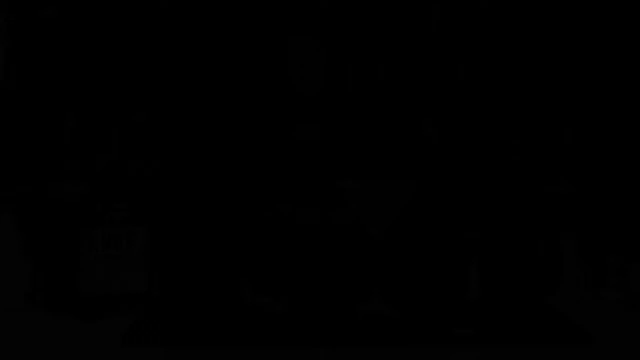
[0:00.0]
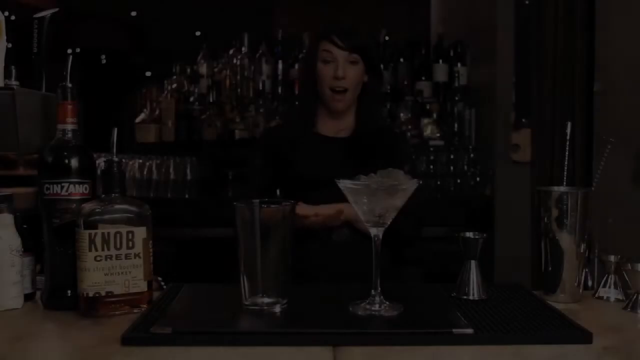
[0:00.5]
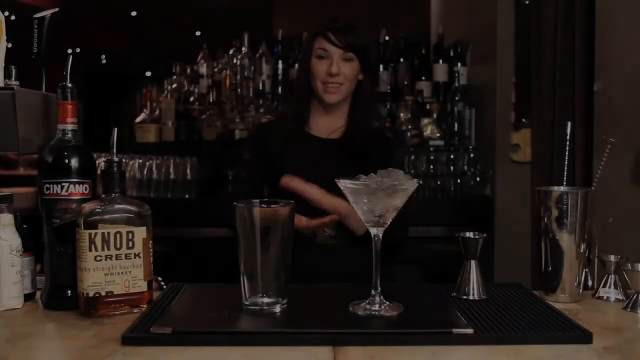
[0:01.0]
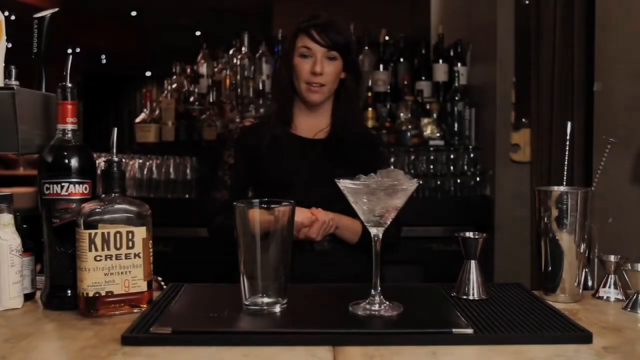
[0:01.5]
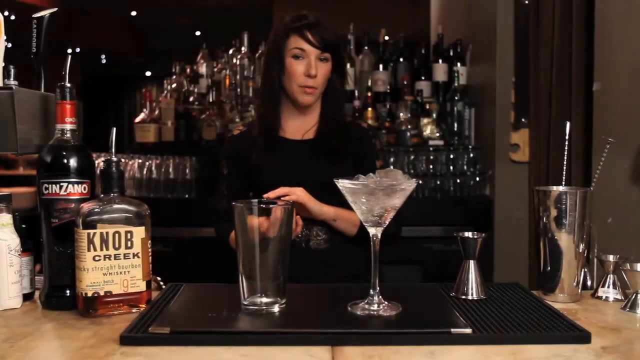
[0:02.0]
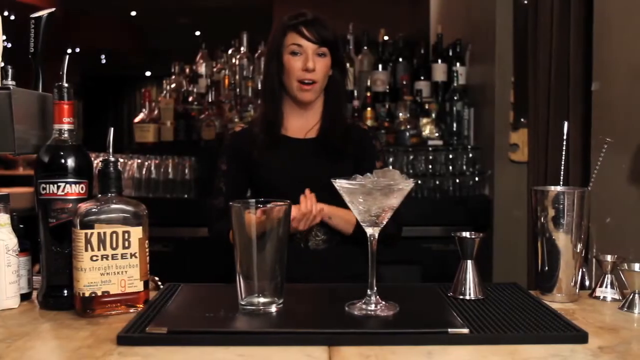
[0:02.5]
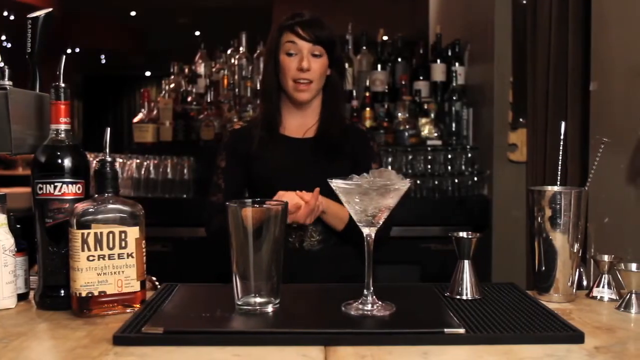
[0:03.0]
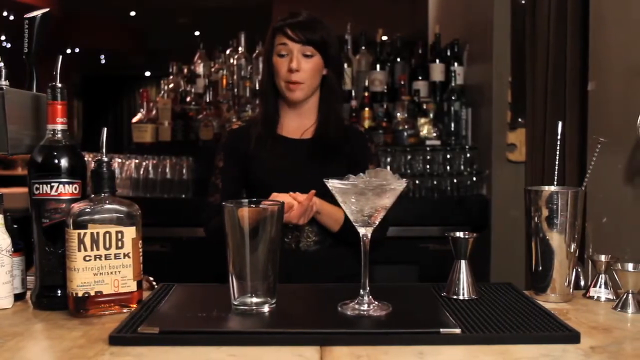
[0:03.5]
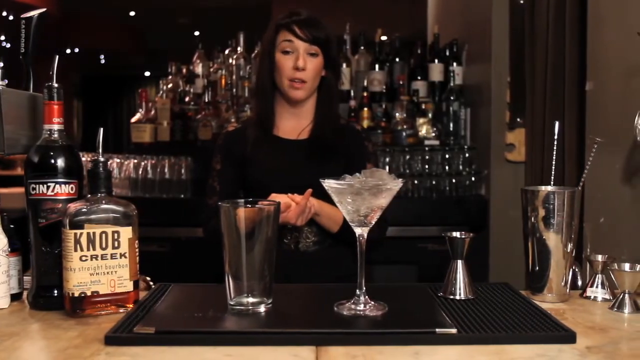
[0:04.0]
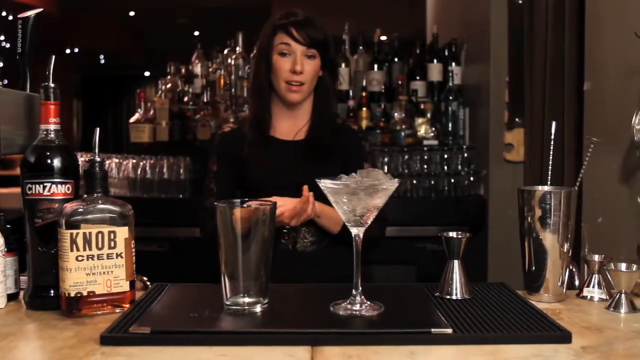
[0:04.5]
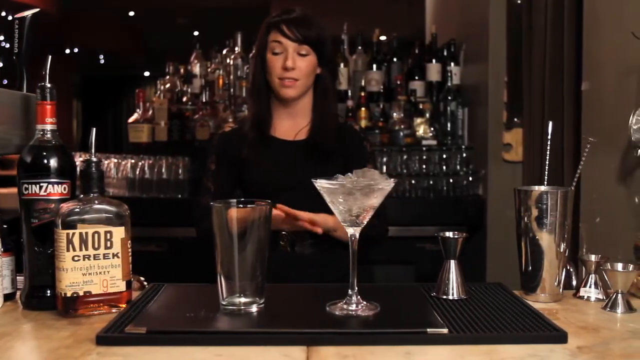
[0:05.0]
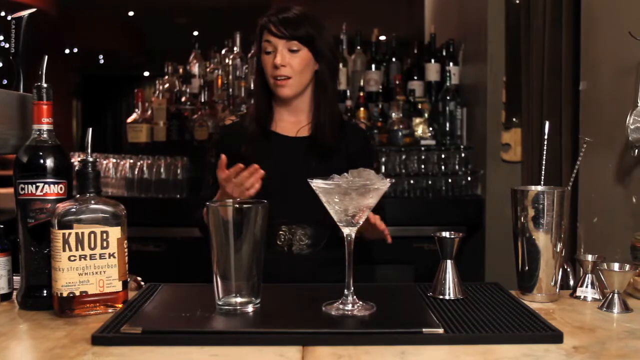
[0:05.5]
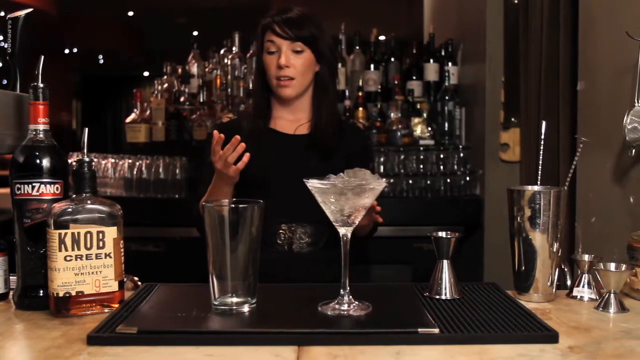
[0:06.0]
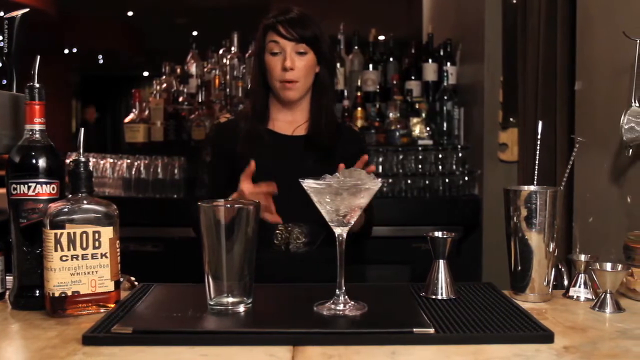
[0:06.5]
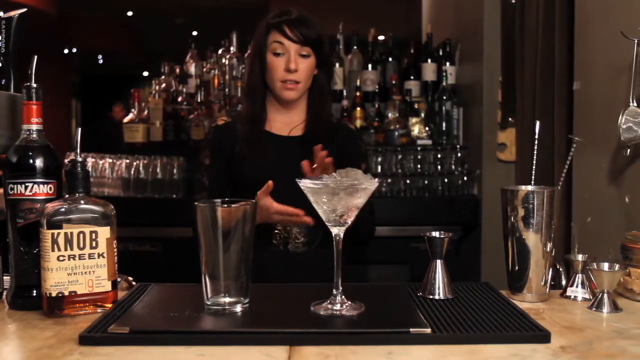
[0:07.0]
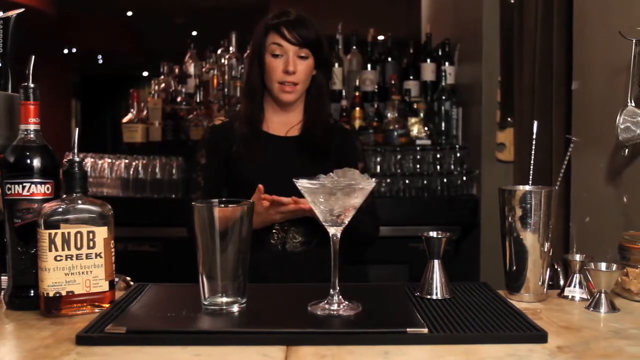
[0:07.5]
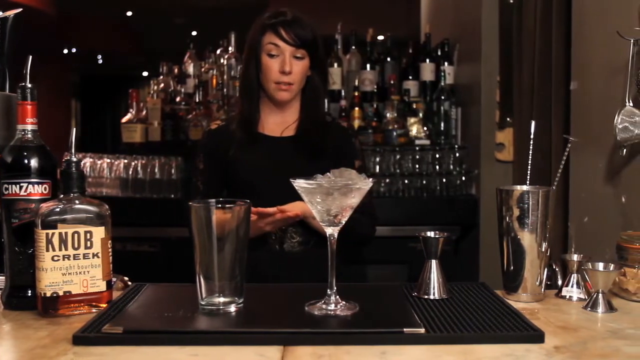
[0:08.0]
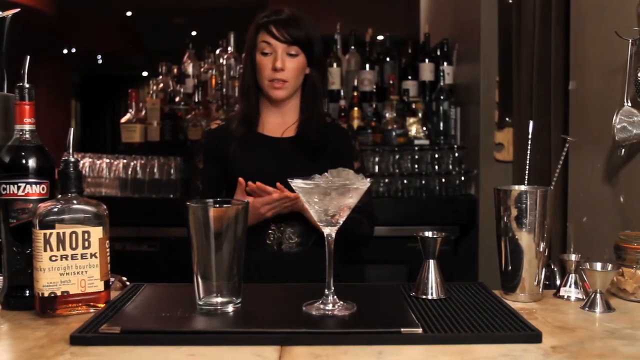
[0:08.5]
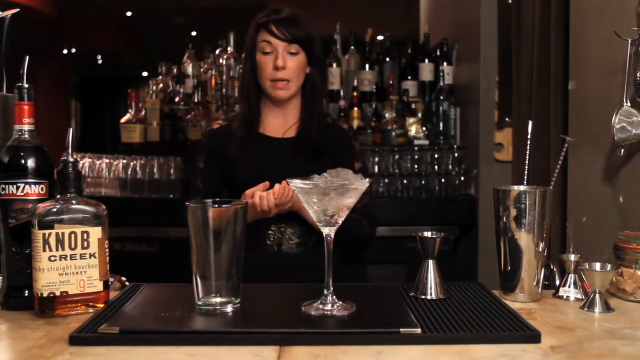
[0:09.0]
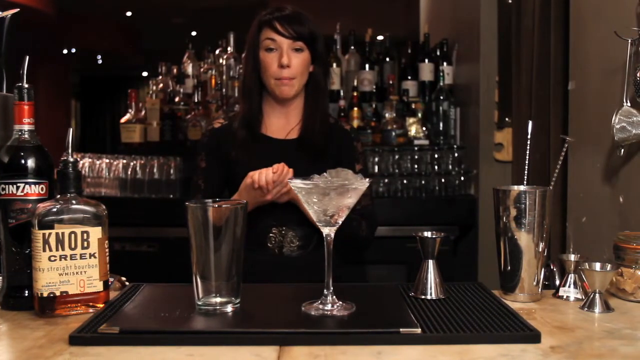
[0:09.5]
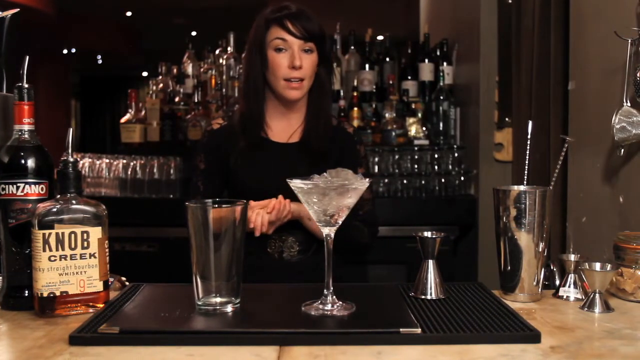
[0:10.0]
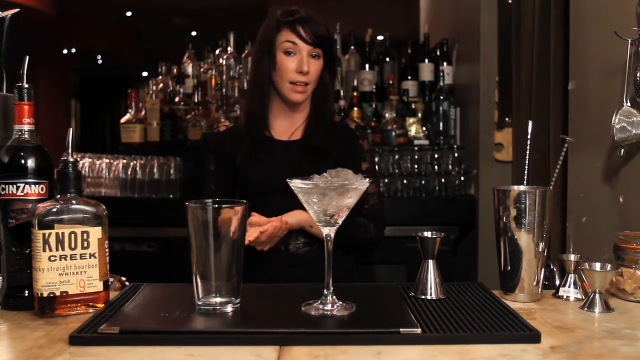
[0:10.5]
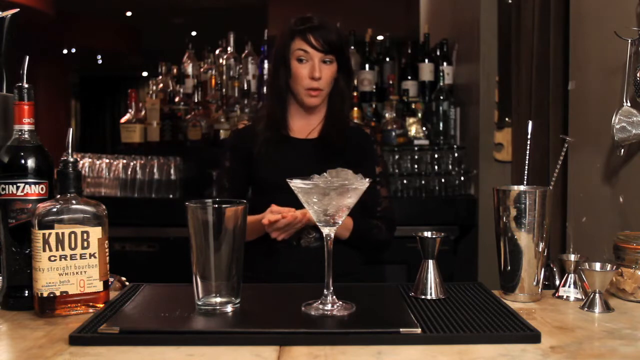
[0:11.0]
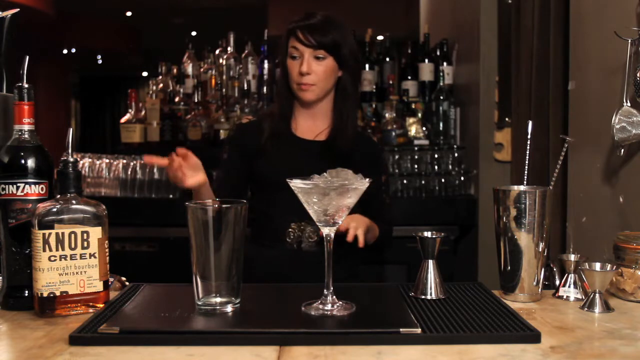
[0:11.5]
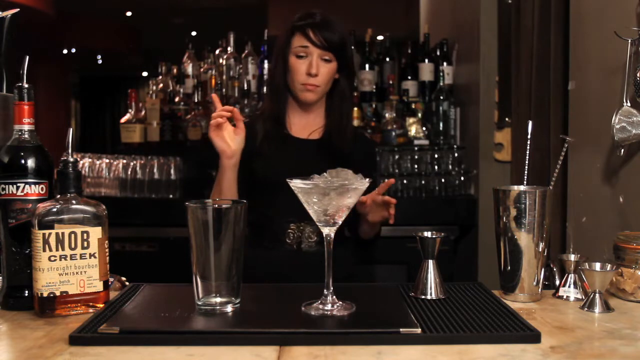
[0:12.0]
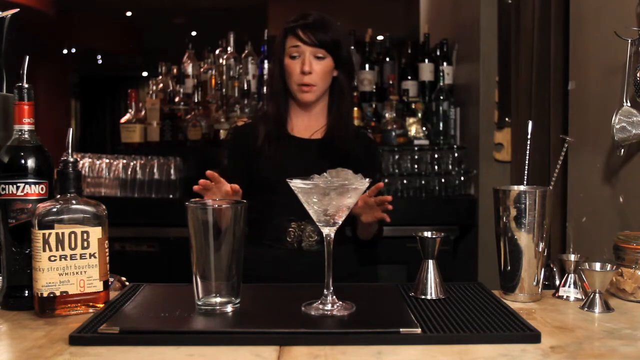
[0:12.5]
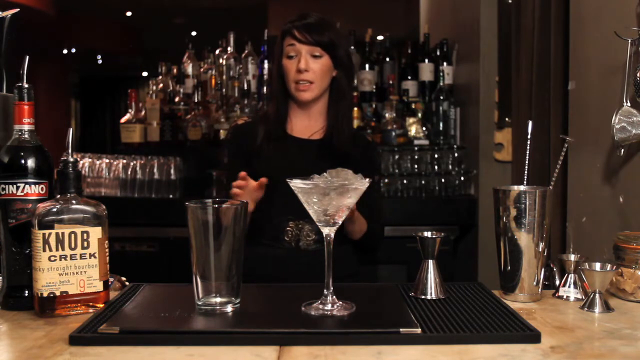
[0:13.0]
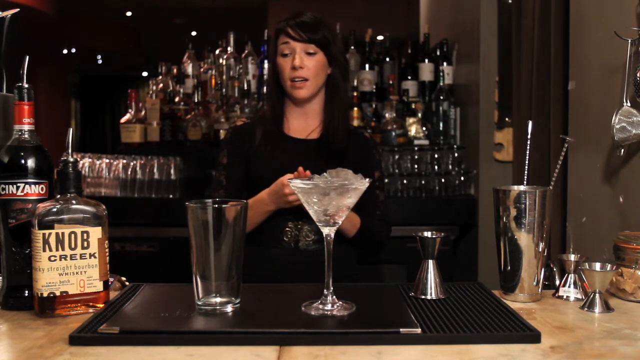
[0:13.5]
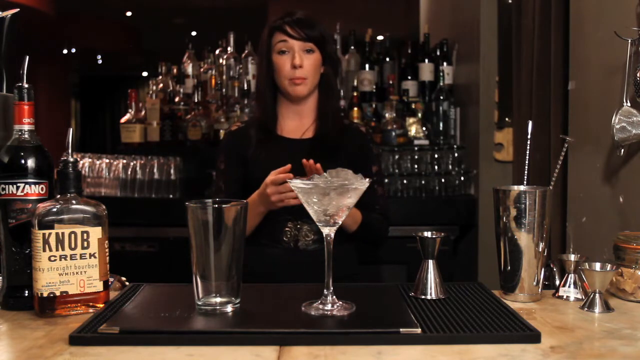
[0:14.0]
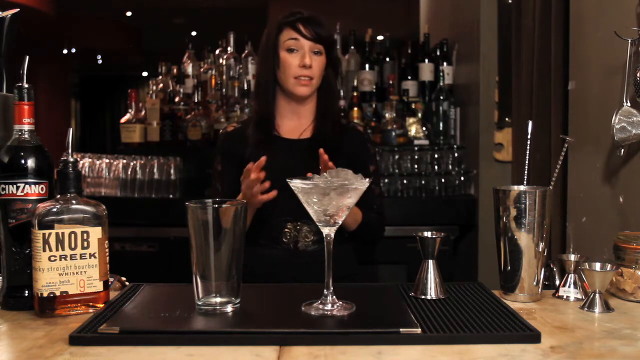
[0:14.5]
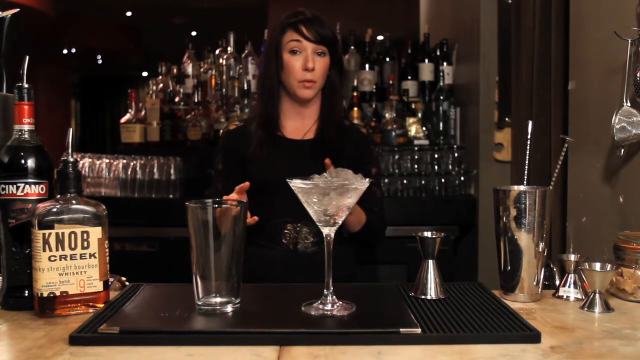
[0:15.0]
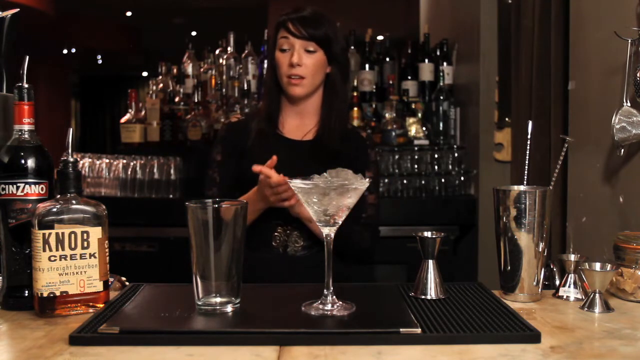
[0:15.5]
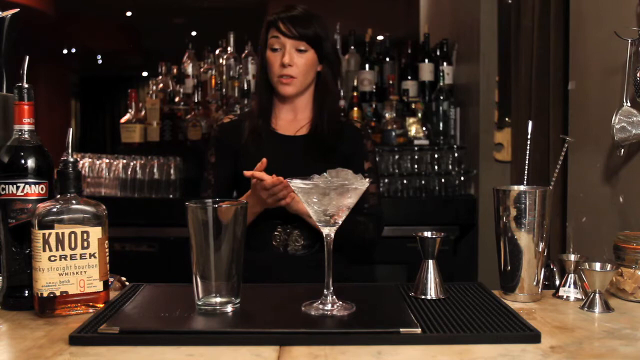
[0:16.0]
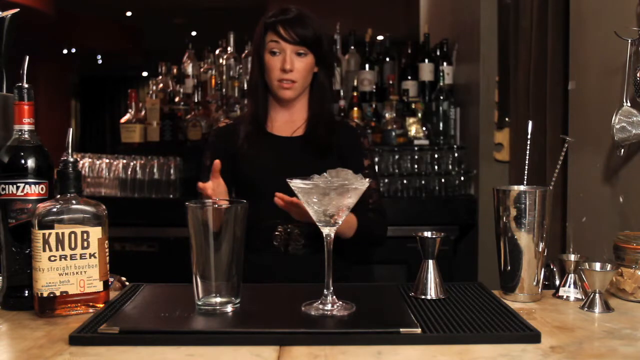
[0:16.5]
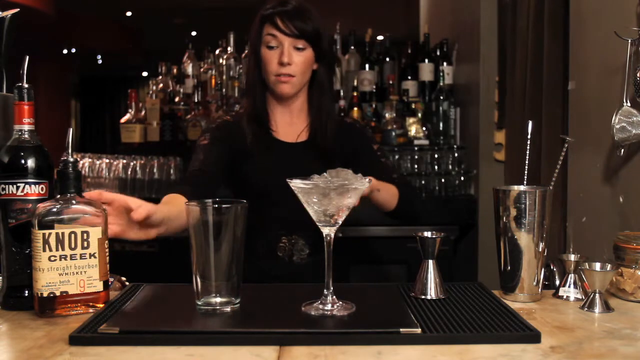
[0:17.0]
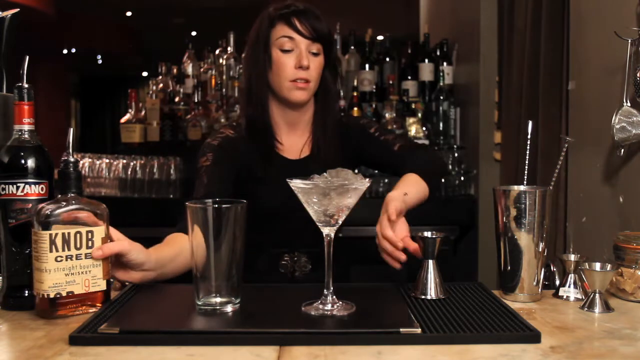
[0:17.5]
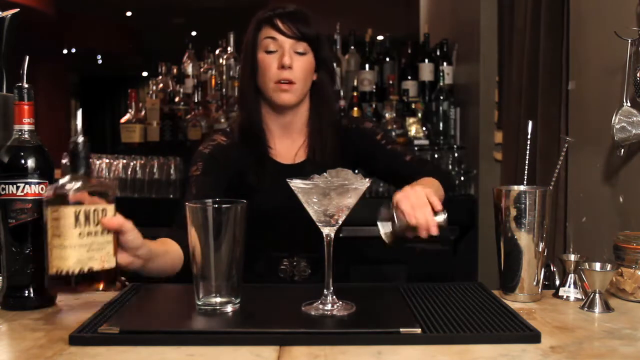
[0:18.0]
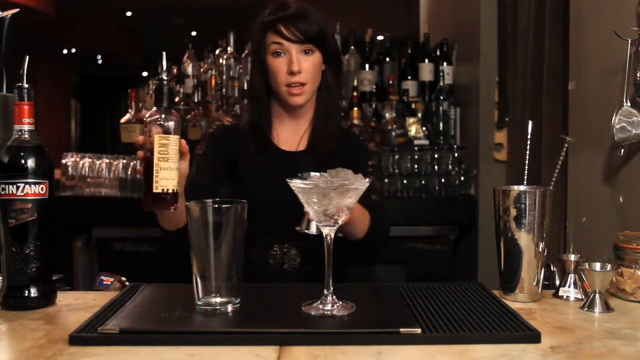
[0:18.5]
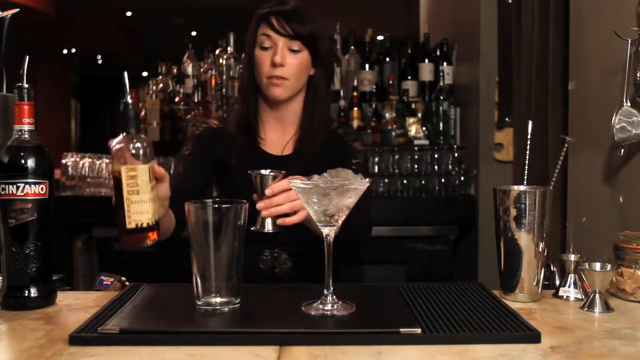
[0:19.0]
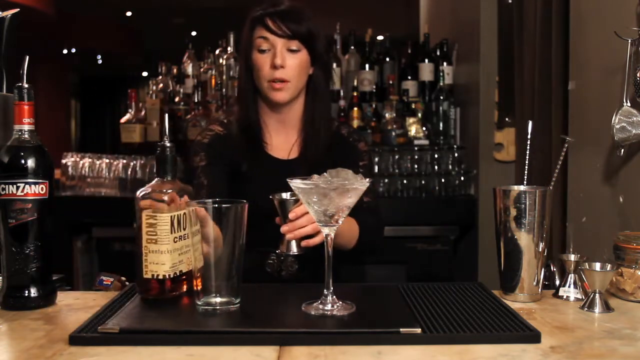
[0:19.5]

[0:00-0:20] The video appears to be filmed at a bar. A woman stands behind the bar and keeps clasping her hands together in front of her. On the bar there is what looks like a martini glass with some white liquid in it, another tall glass next to it, and some kind of little measuring utensil on the right side of the screen. She begins to speak and clasps her hands together once again. She points to the cups on the screen, then reaches over to the alcohol and appears to measure it with the little metal measuring device. The shot cuts as she is about to pour the alcohol into the measuring device.